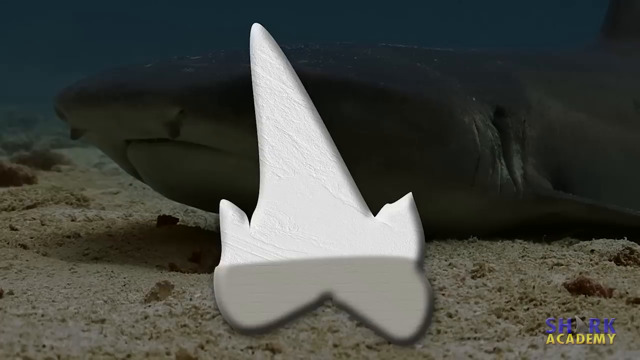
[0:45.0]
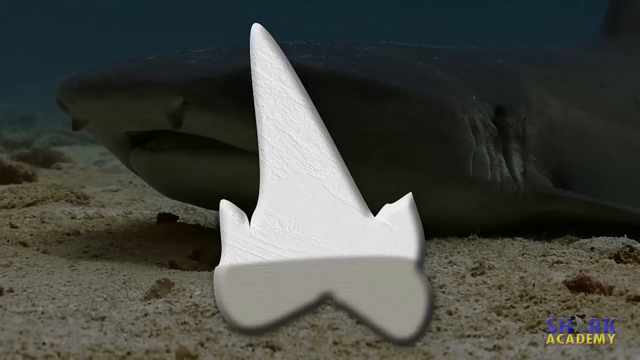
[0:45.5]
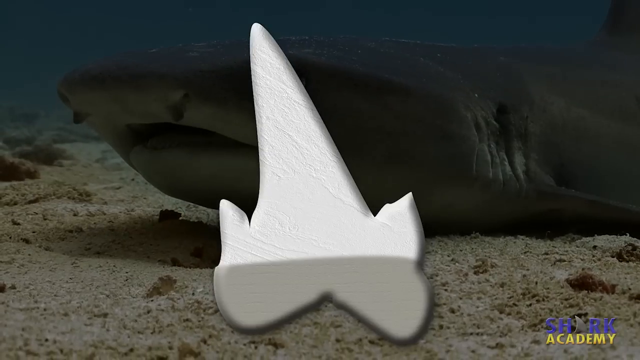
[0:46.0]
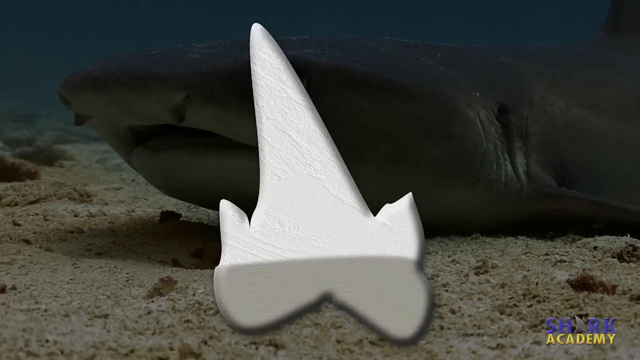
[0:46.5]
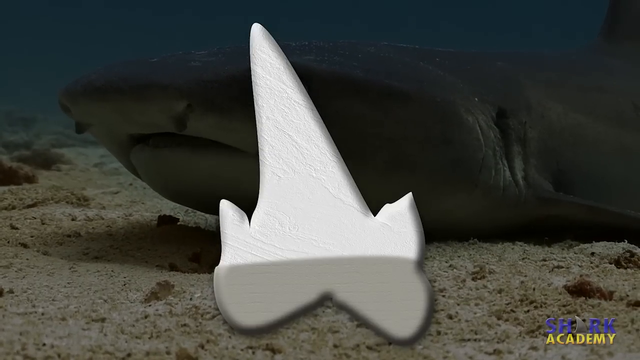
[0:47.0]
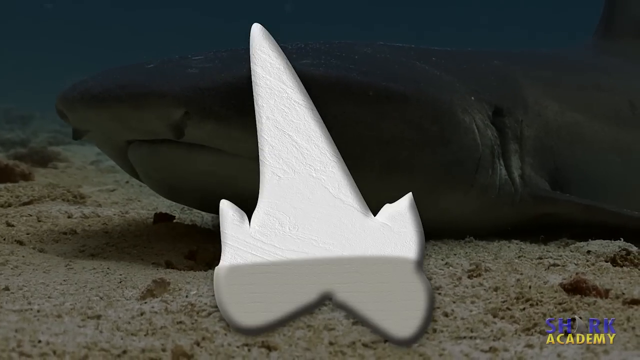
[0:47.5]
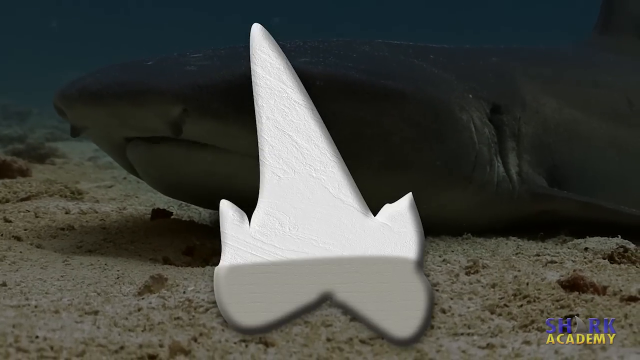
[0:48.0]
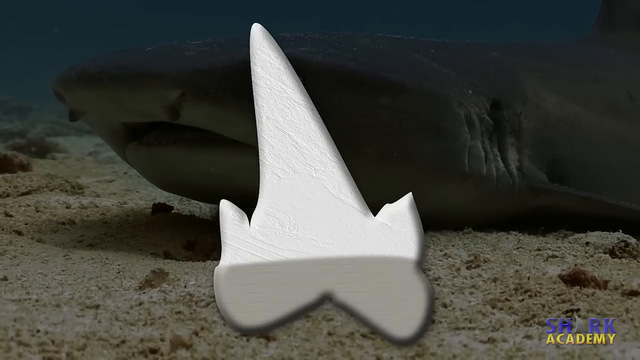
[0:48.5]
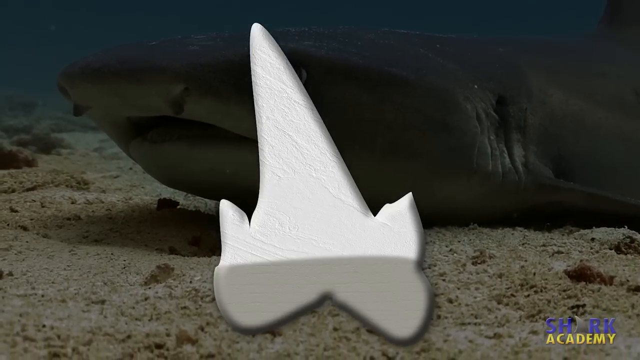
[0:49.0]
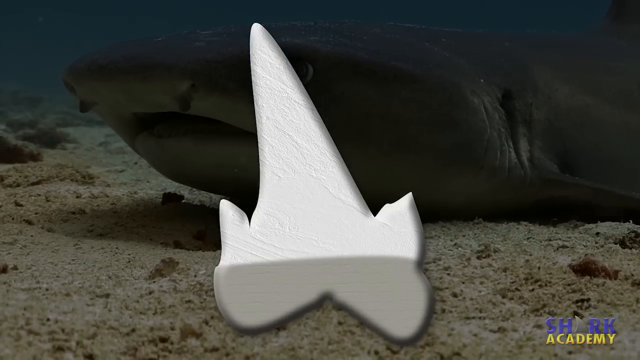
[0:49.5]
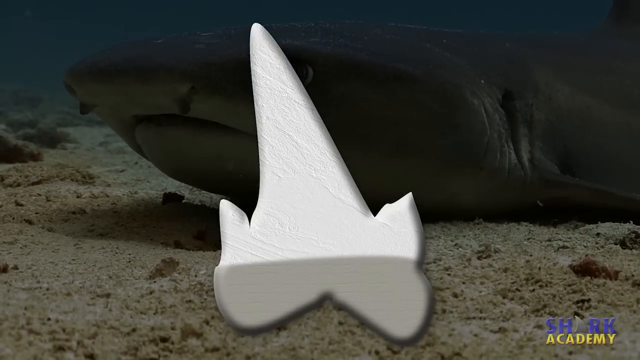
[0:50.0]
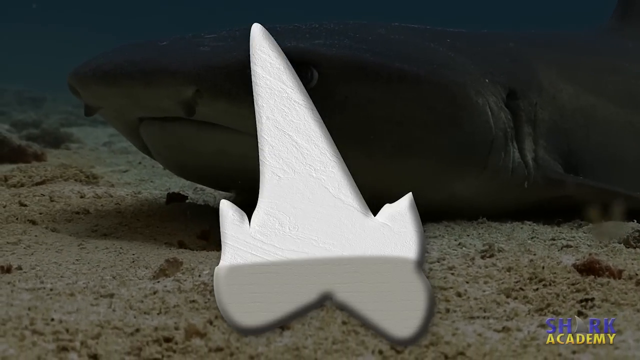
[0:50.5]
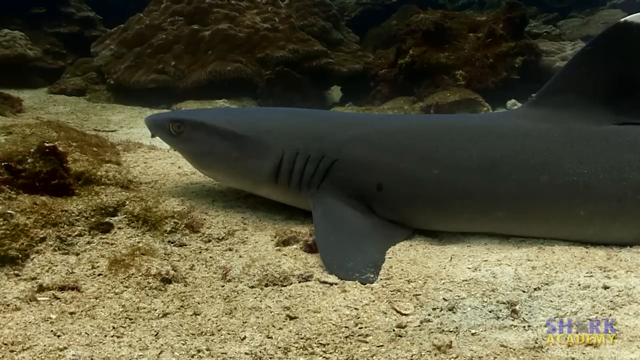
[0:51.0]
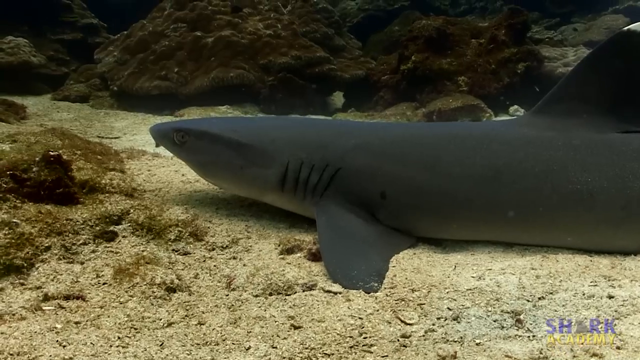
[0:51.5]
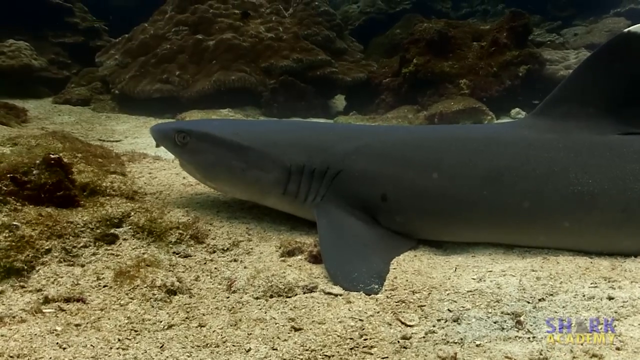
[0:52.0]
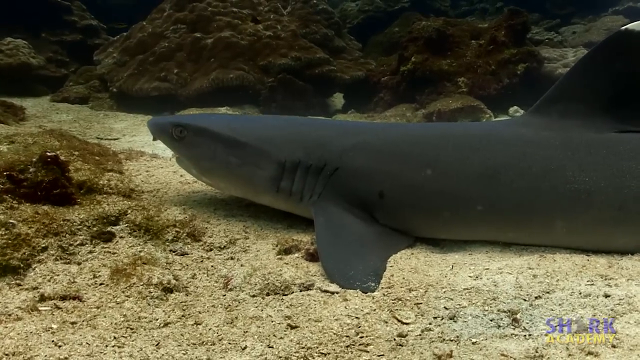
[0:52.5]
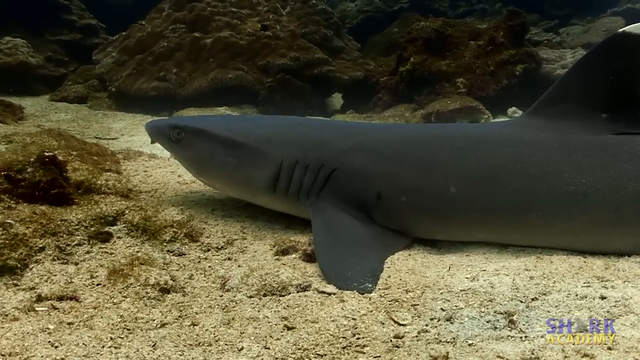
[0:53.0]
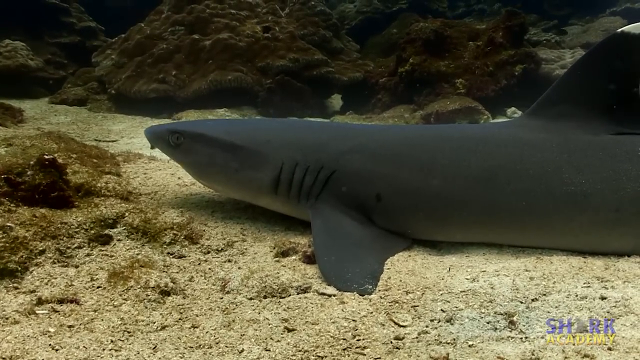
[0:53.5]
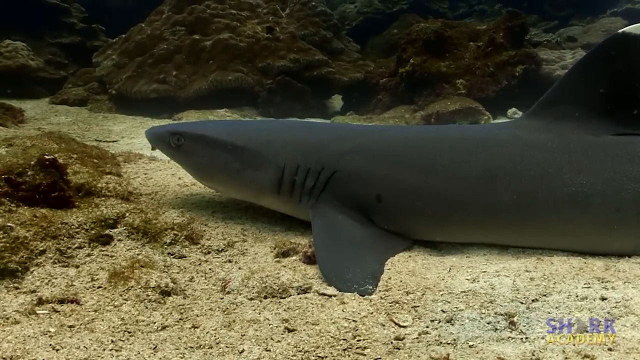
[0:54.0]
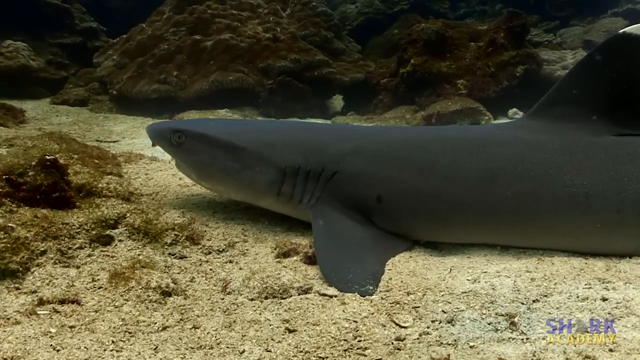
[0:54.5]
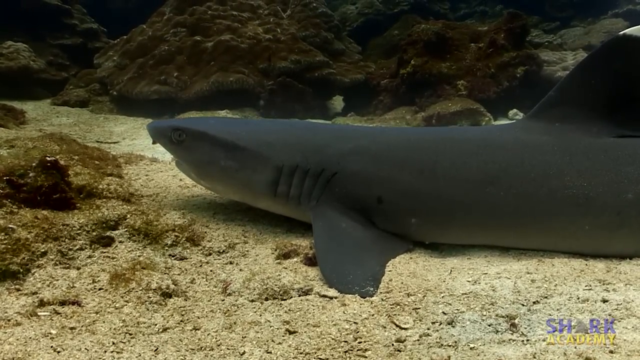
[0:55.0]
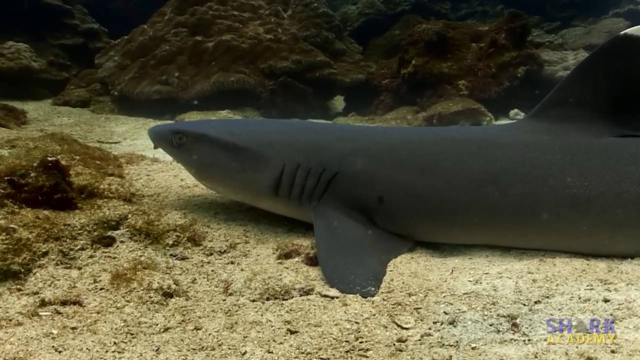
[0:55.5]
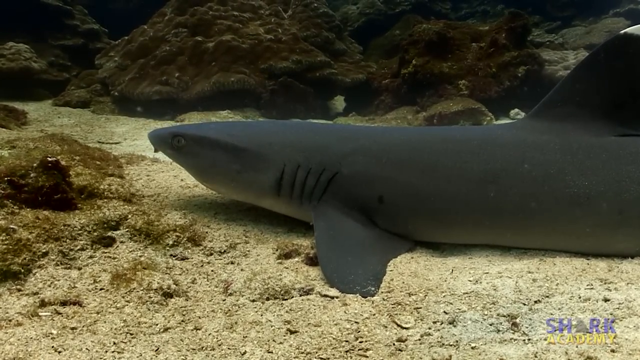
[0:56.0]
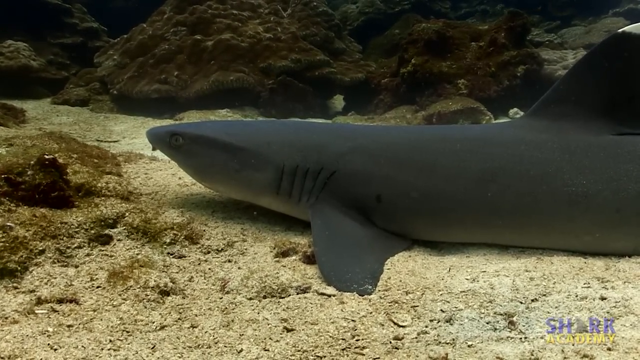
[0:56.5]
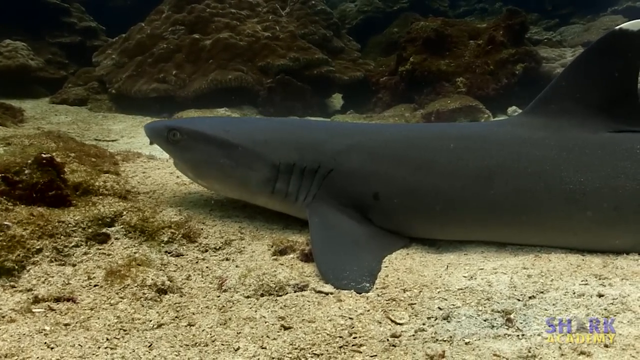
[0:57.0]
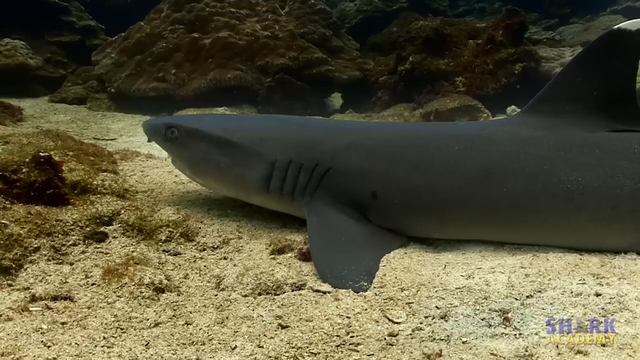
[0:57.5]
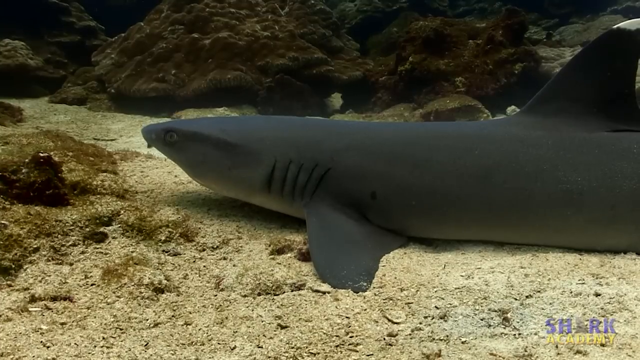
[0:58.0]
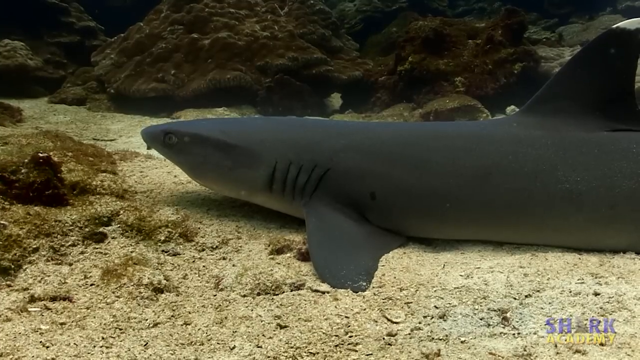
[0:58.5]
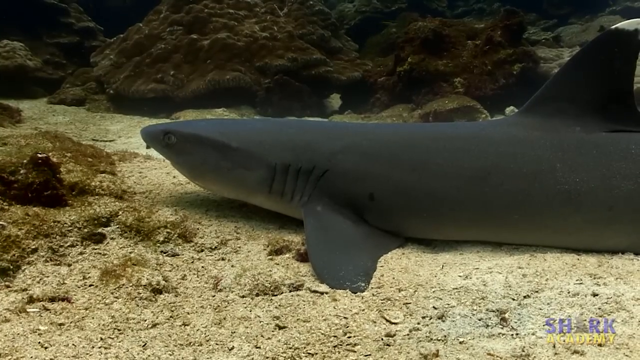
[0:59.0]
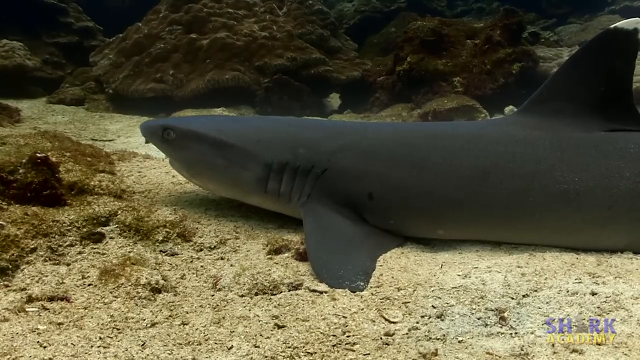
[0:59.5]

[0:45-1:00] A white overlay of a three-pointed shark's tooth is in the center of the screen, then fades away to show the shark lying on the seabed. It is very long and very dark gray, its mouth continually opening and closing, and the gills on the left side of its body are moving, opening and closing. The seabed it lies on looks like beige sand and gravel, and behind it there are lots of brown rocks on the floor of the water. In the lower right corner the Shark Academy logo continues to be shown, with "Shark" in blue, the A as a dorsal fin, and "Academy" in yellow text.